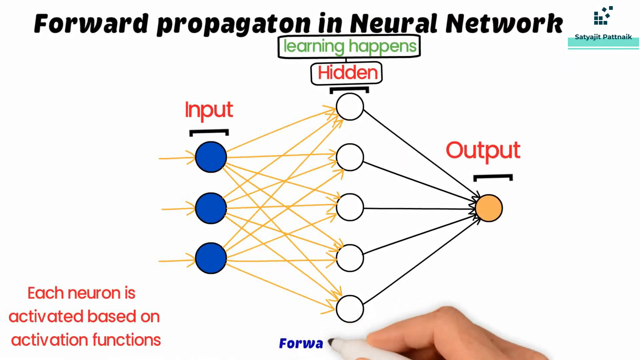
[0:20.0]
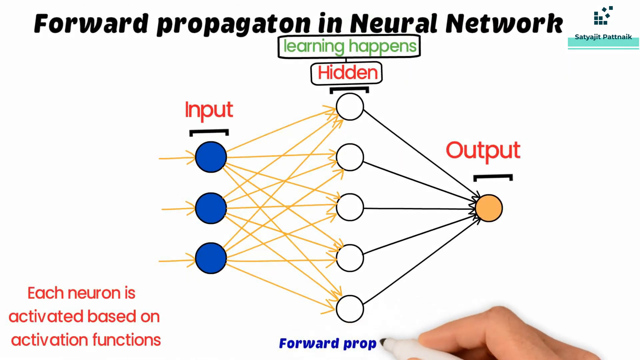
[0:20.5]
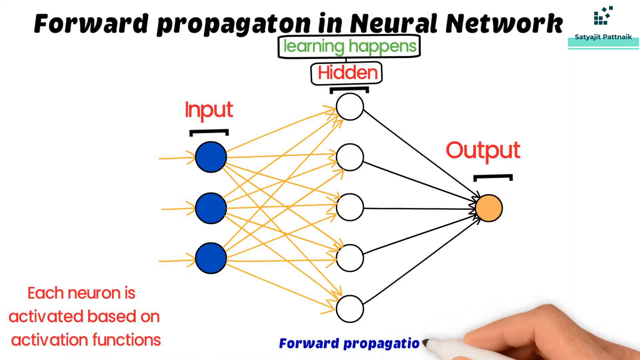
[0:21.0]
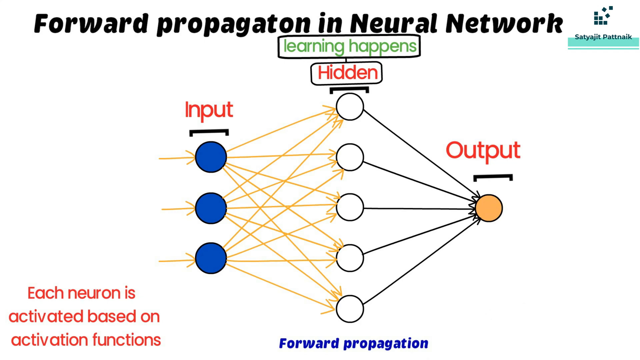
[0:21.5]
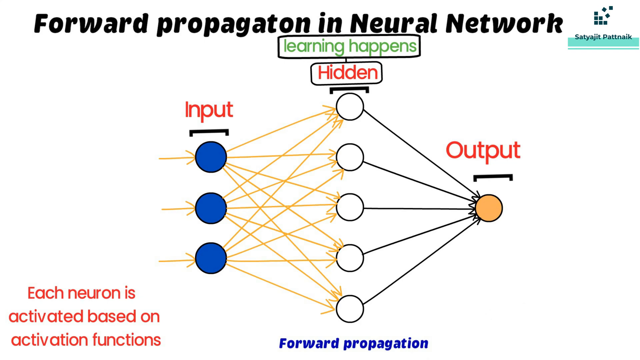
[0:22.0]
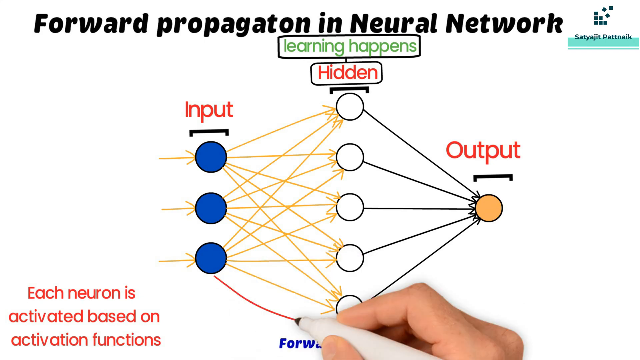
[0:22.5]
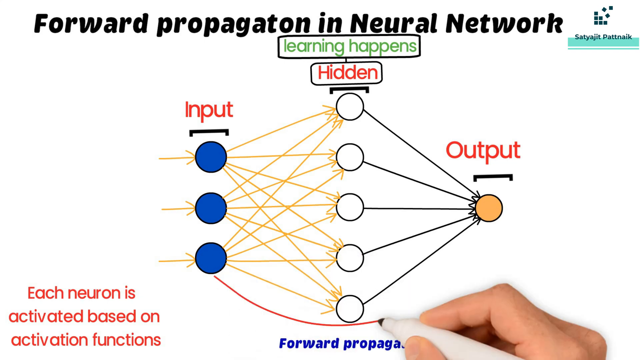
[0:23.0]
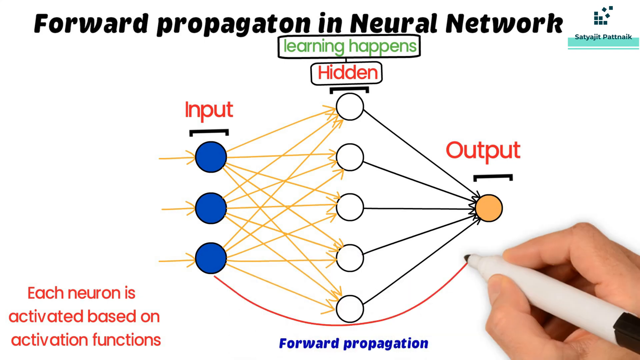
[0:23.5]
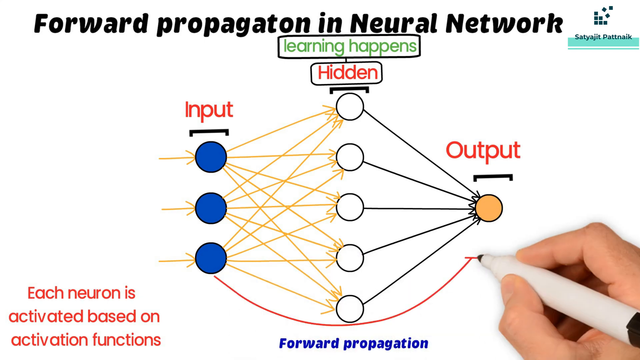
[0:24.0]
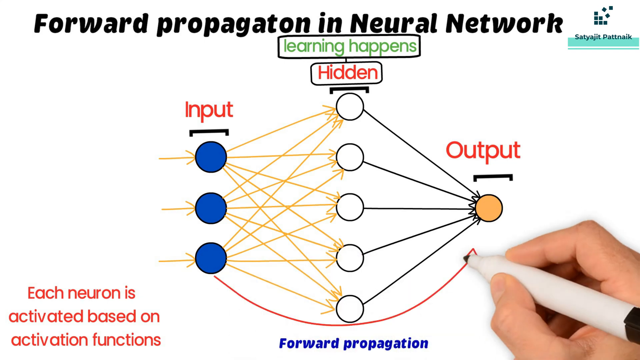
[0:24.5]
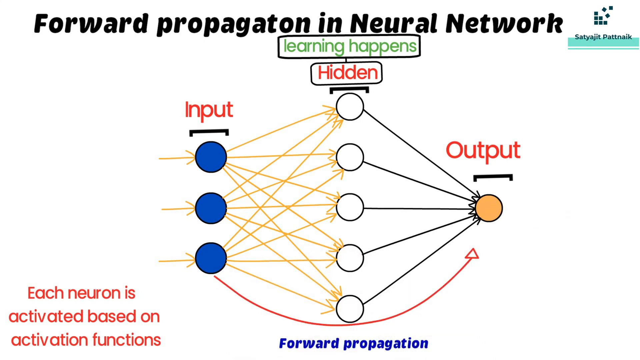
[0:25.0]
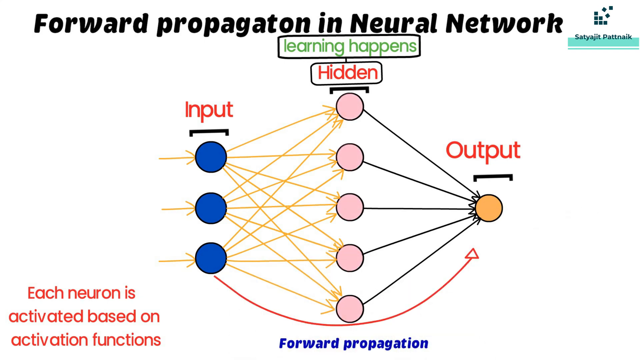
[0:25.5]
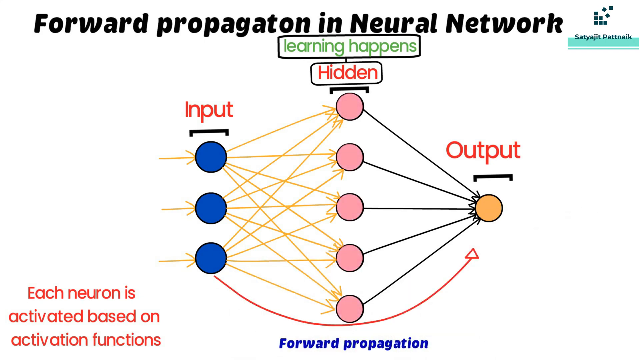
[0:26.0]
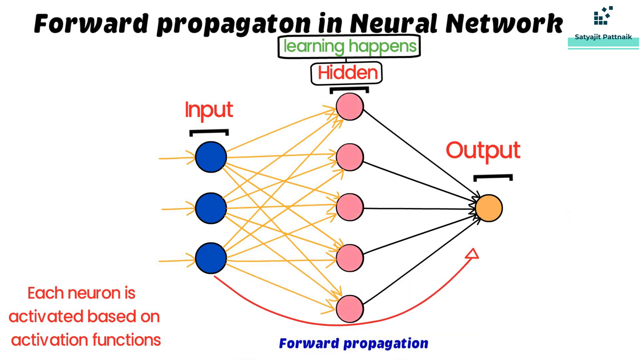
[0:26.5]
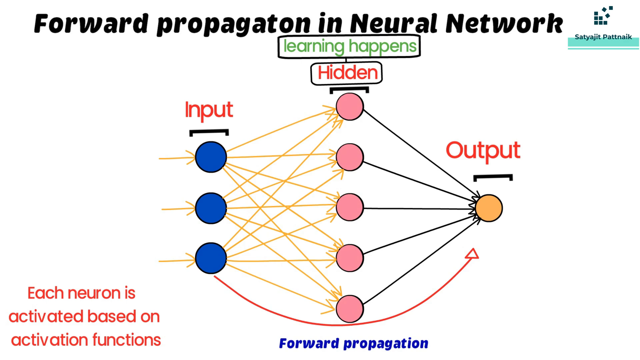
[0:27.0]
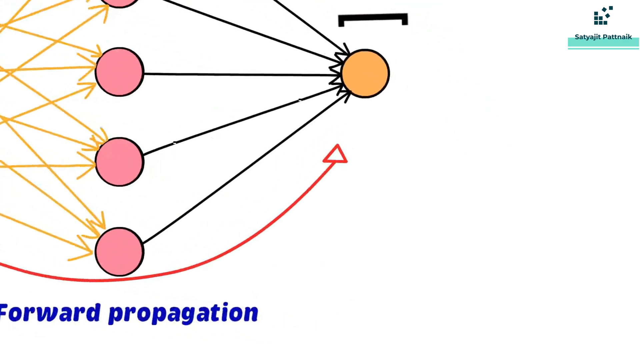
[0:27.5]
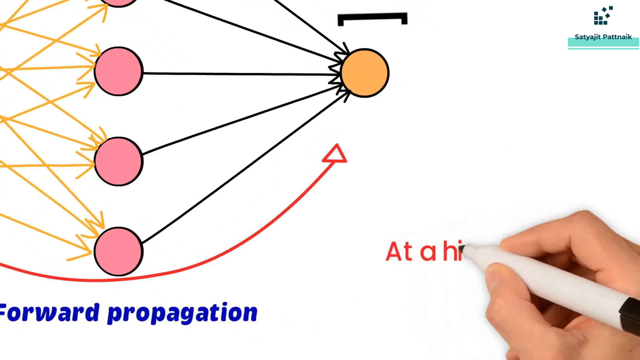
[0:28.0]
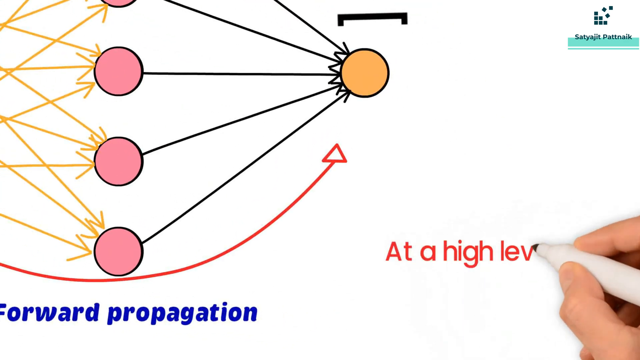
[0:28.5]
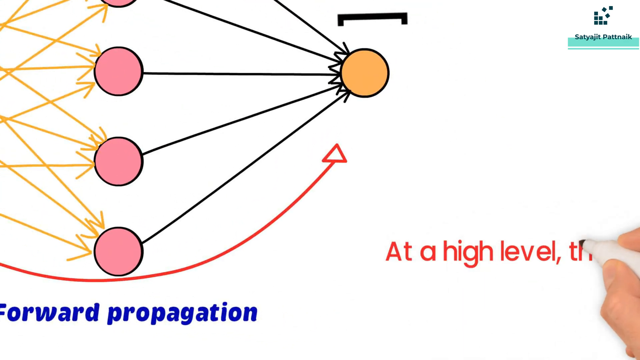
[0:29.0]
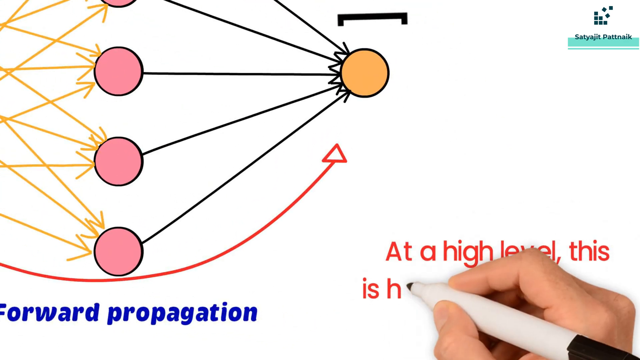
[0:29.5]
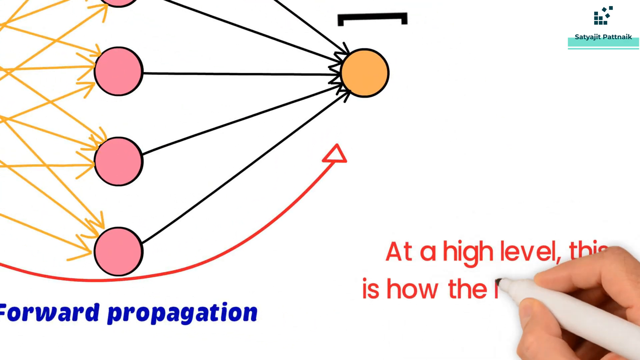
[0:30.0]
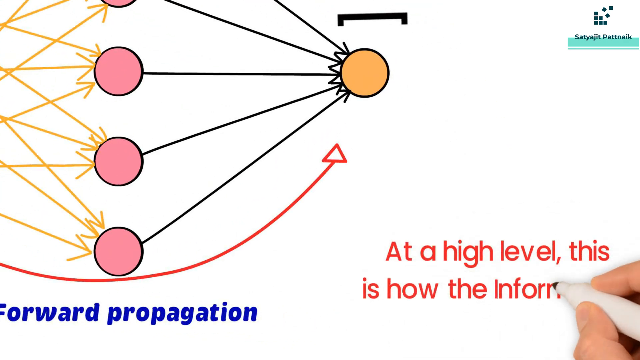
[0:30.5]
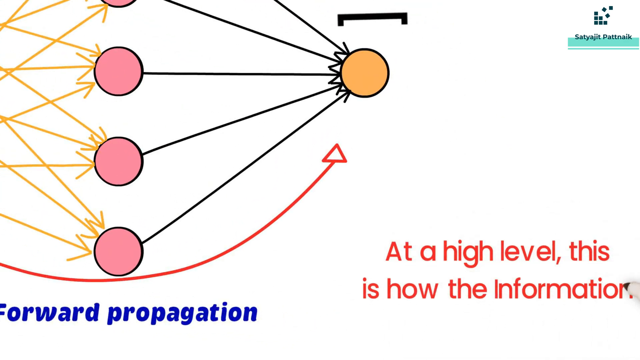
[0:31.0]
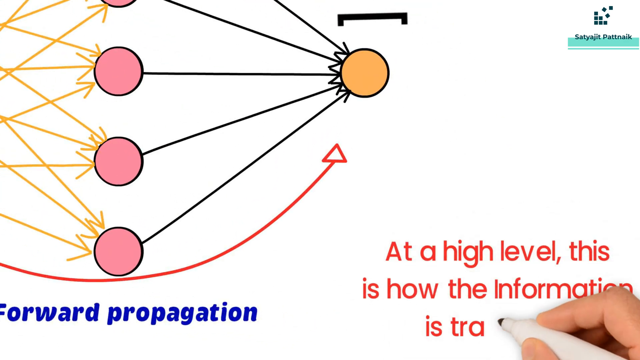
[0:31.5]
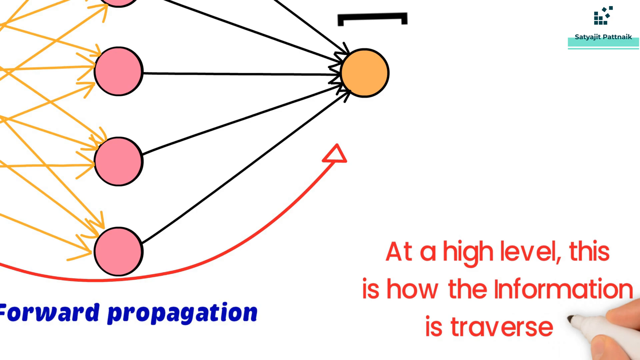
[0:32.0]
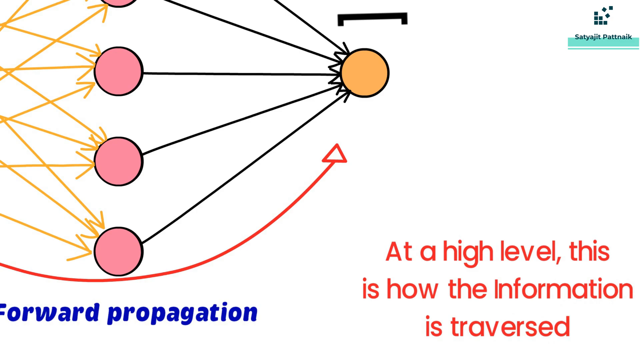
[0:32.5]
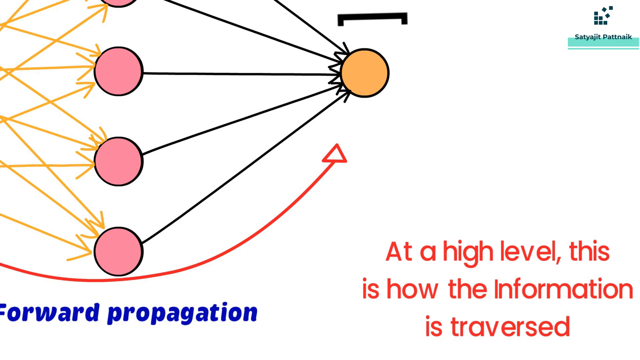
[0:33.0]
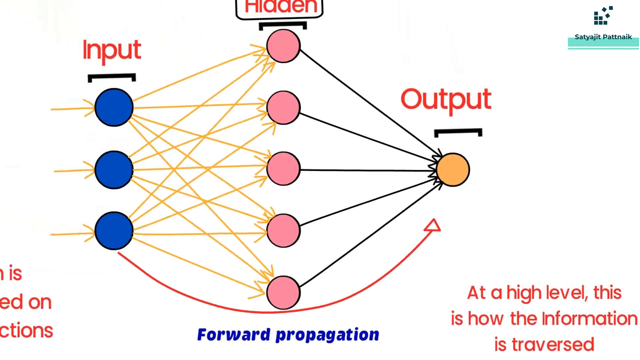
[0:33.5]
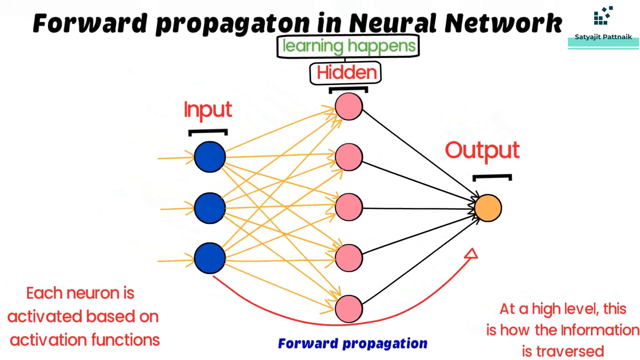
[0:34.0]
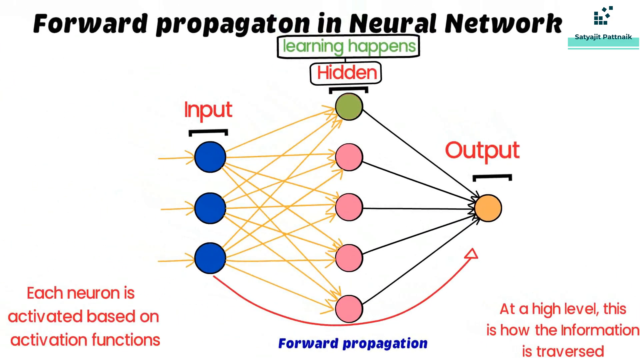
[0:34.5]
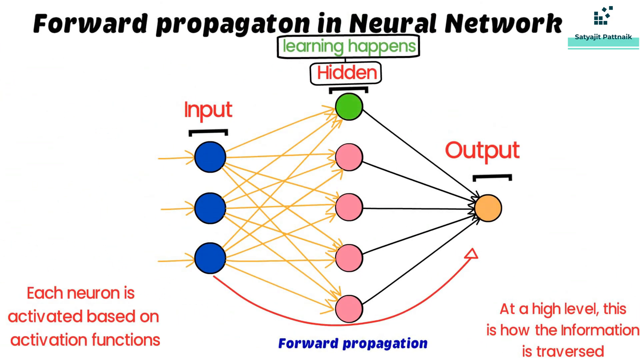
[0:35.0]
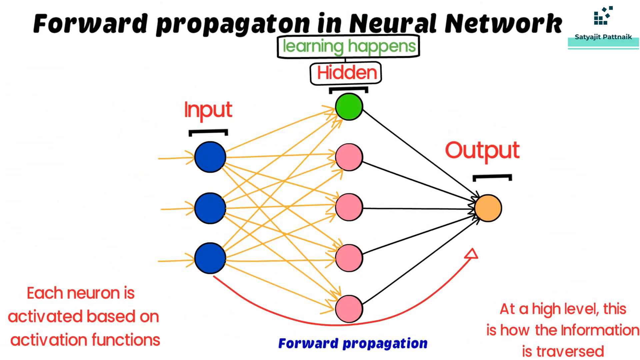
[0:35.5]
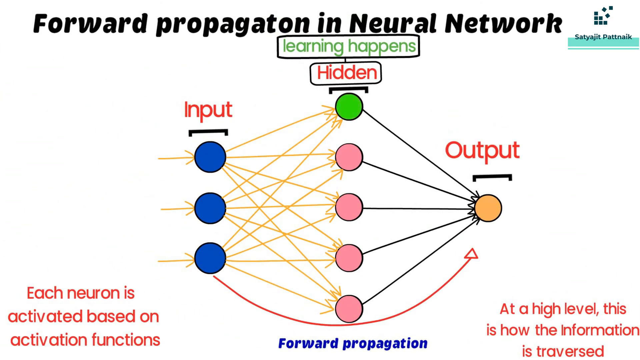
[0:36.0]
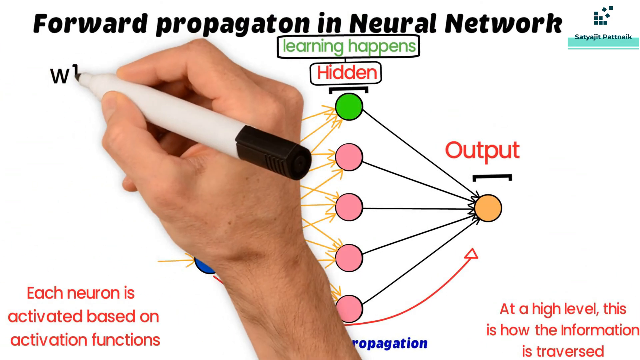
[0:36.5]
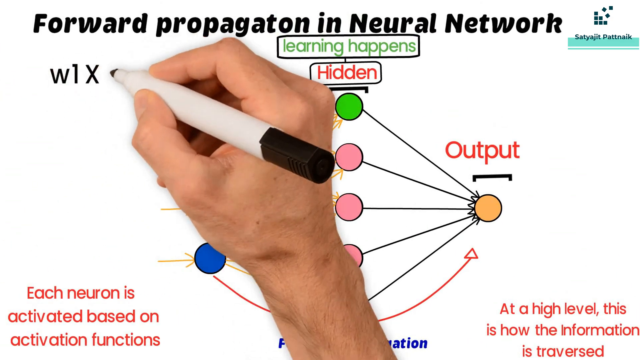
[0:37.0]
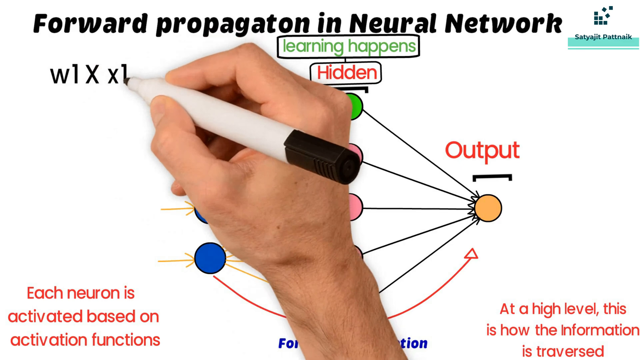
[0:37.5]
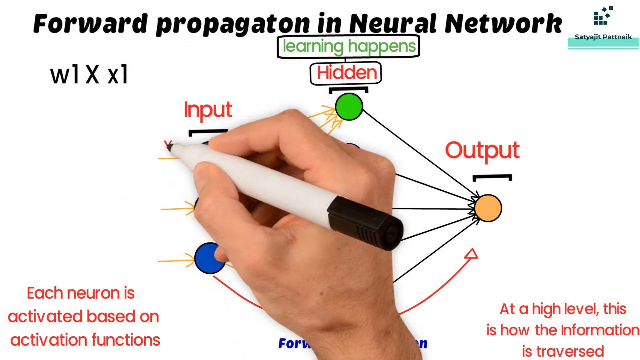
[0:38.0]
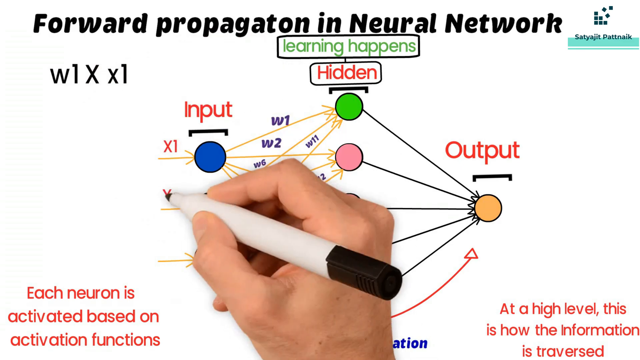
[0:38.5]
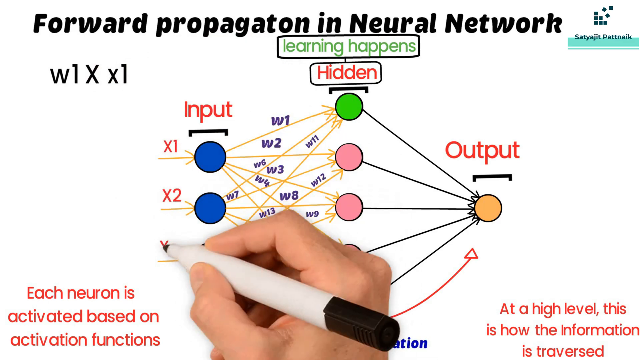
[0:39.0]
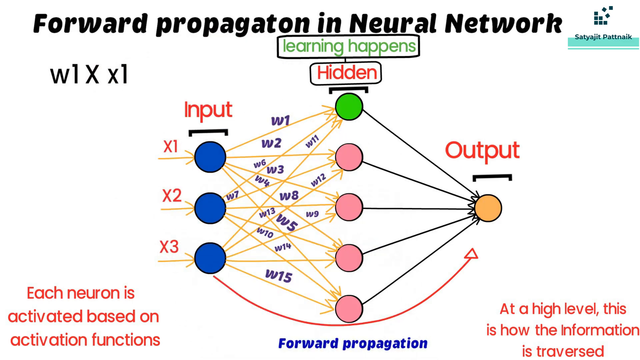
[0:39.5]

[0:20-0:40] The input circles are all blue, and the output is a single orange circle. Among the hidden circles, the first is green and the rest are a light pink. The headings are written in black, while the other words and letters are written in red. The inputs are named, and a big arrow runs below the circles, given a heading stating what it represents.